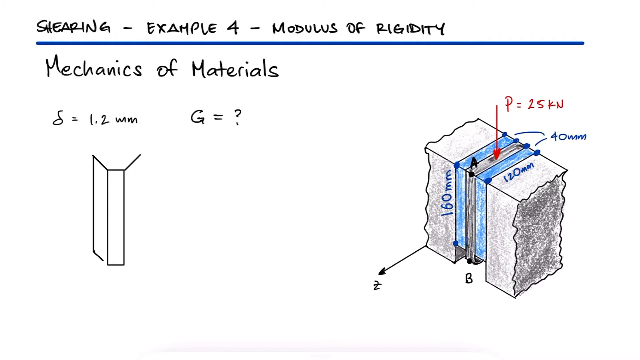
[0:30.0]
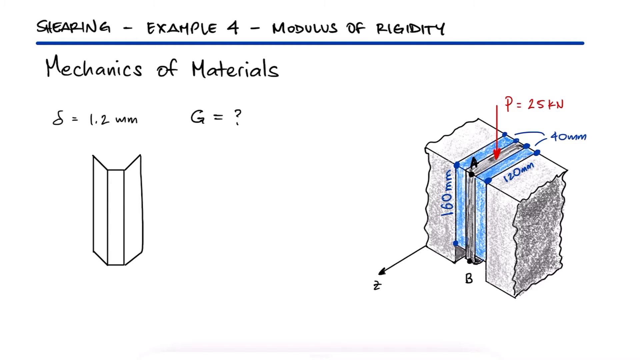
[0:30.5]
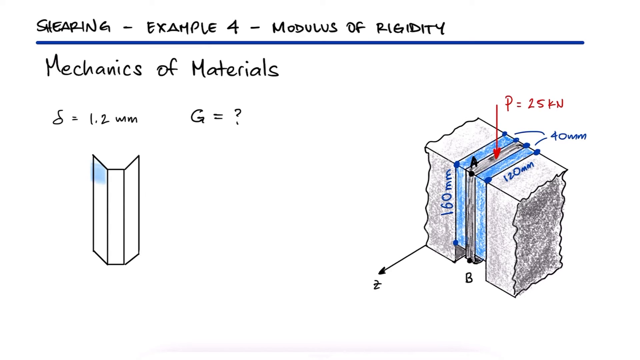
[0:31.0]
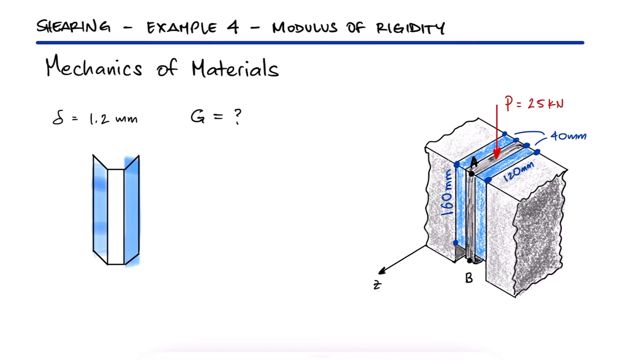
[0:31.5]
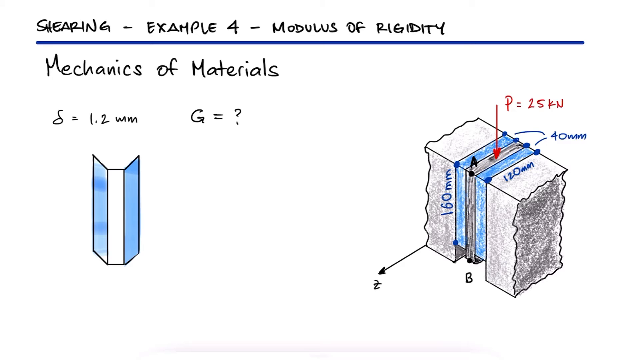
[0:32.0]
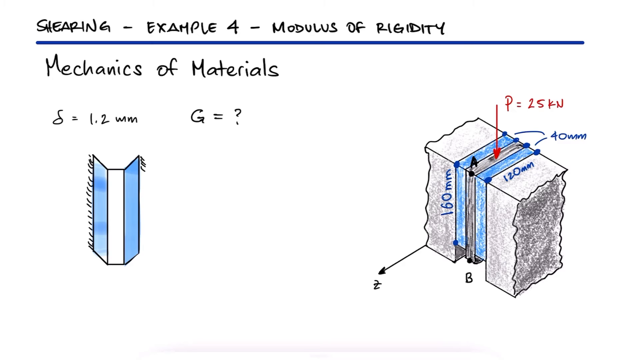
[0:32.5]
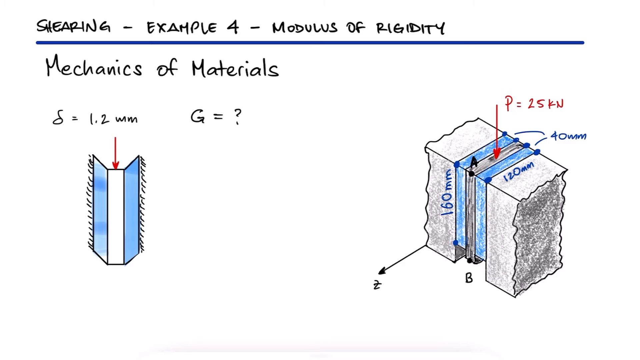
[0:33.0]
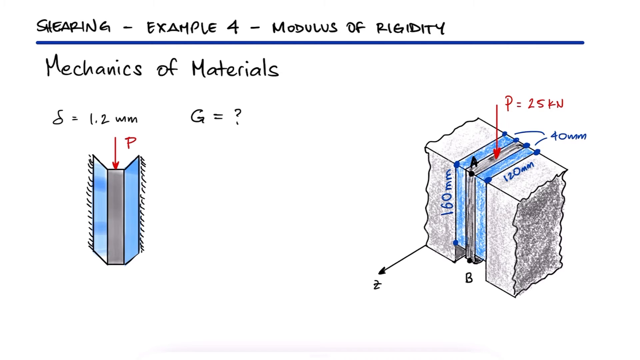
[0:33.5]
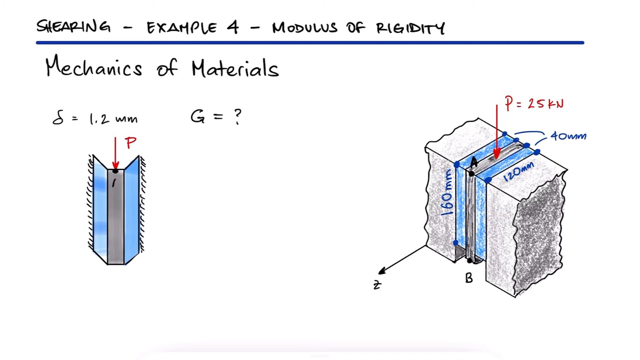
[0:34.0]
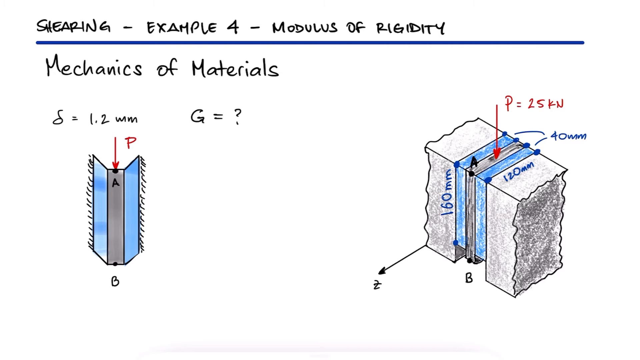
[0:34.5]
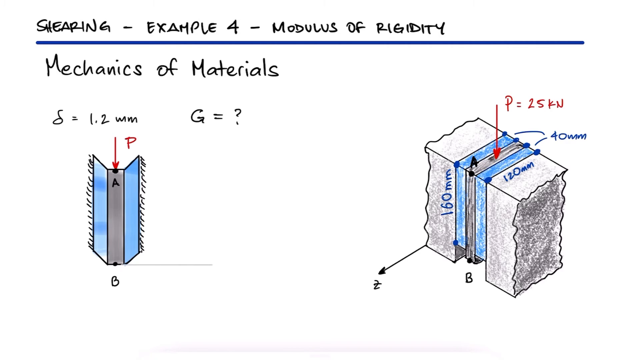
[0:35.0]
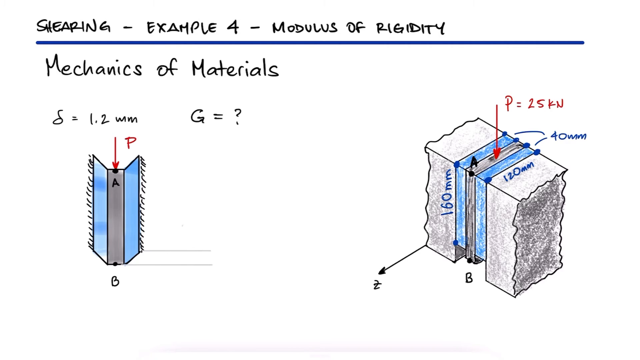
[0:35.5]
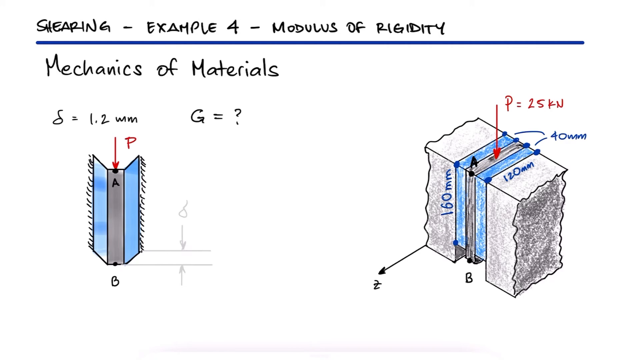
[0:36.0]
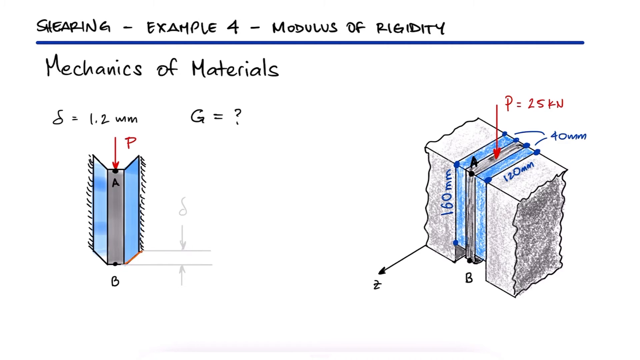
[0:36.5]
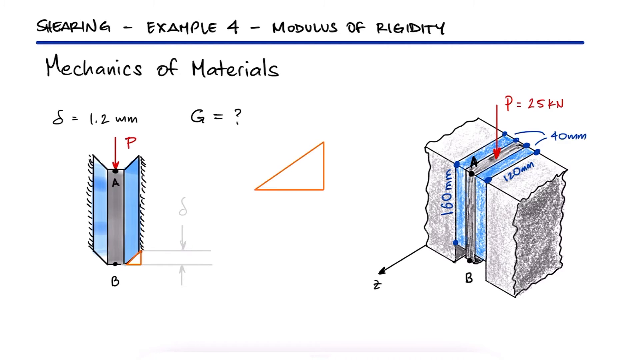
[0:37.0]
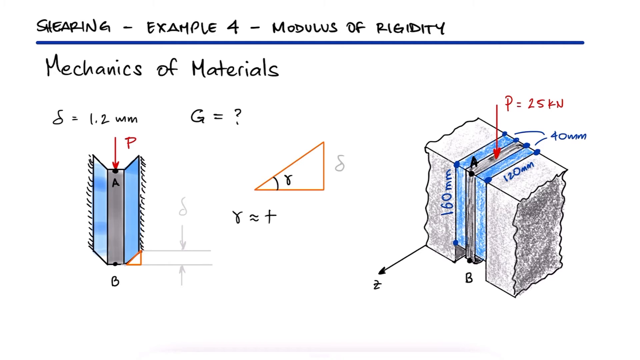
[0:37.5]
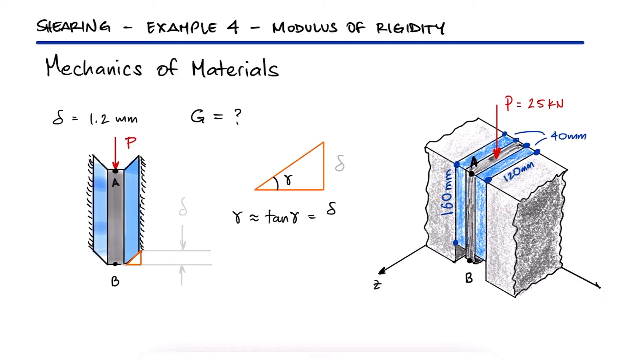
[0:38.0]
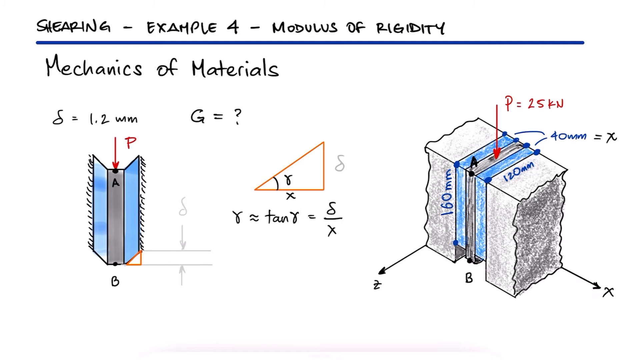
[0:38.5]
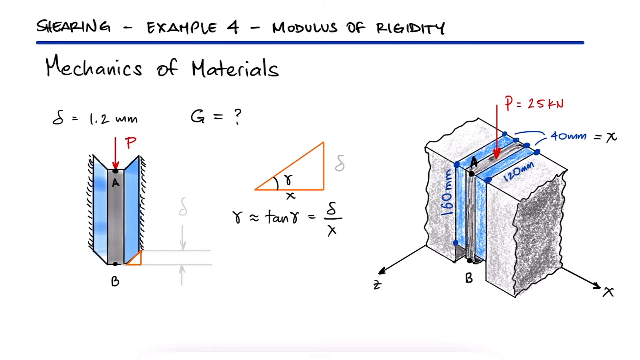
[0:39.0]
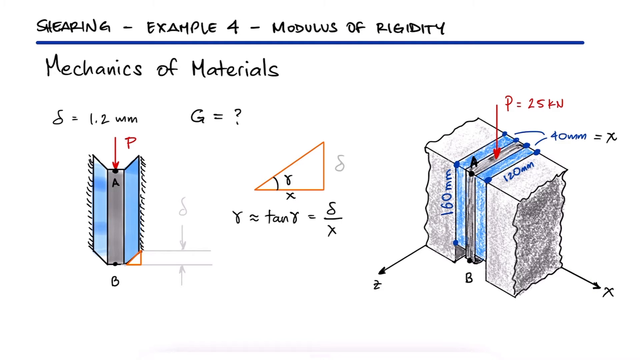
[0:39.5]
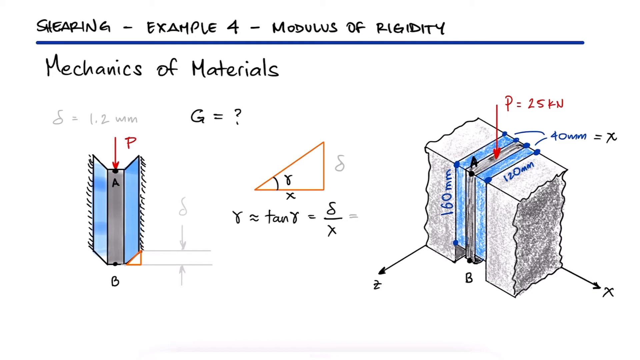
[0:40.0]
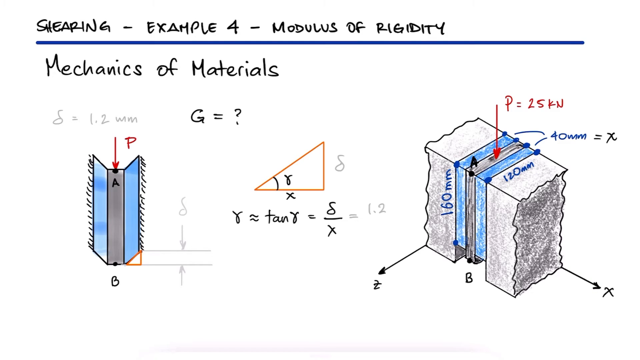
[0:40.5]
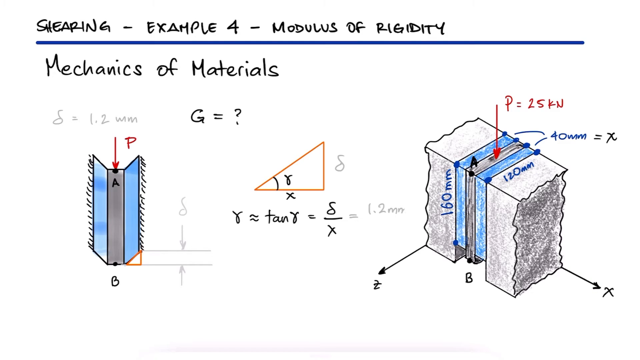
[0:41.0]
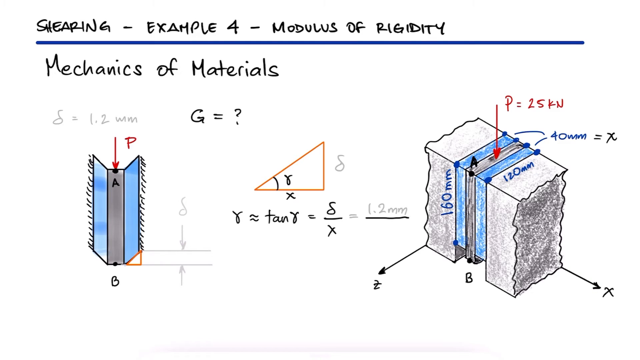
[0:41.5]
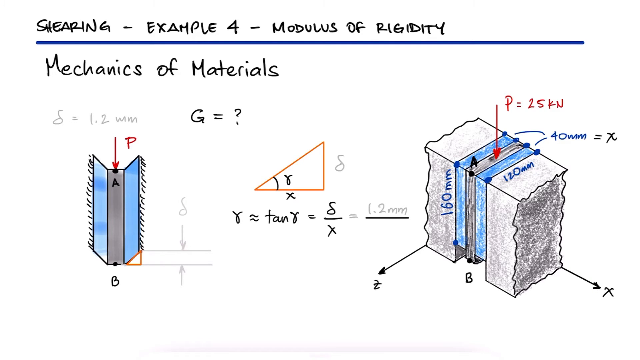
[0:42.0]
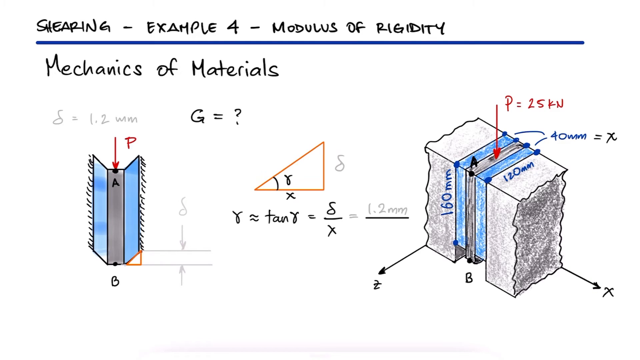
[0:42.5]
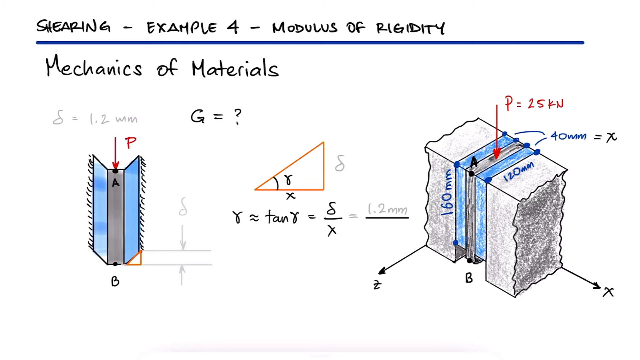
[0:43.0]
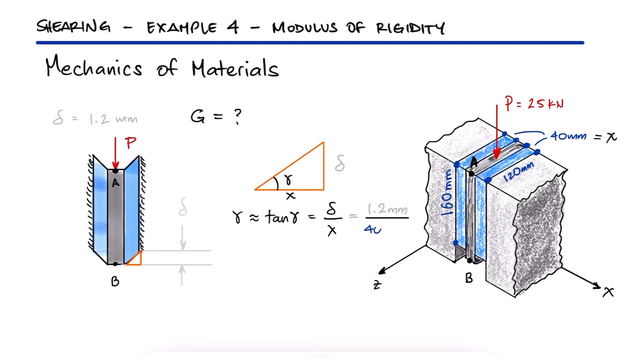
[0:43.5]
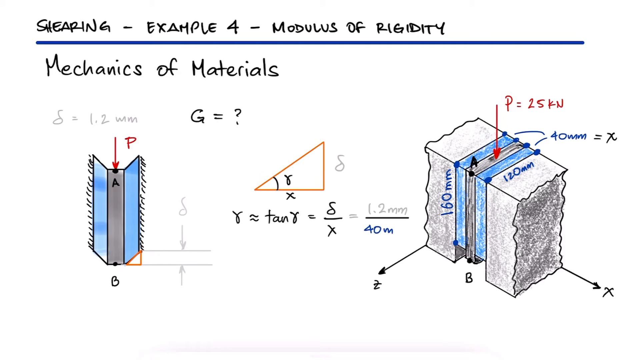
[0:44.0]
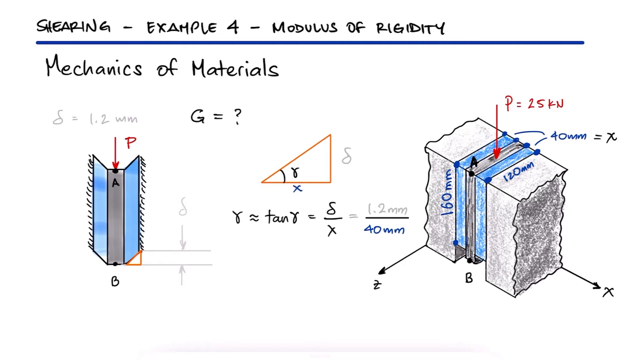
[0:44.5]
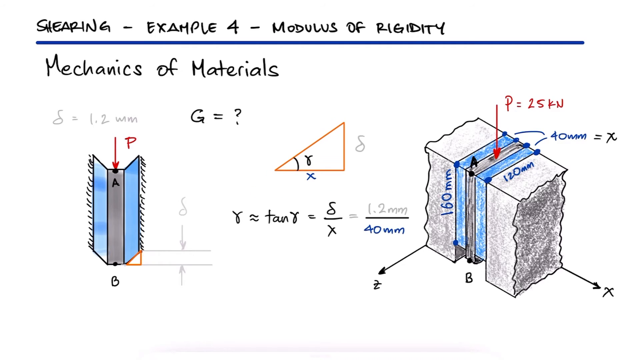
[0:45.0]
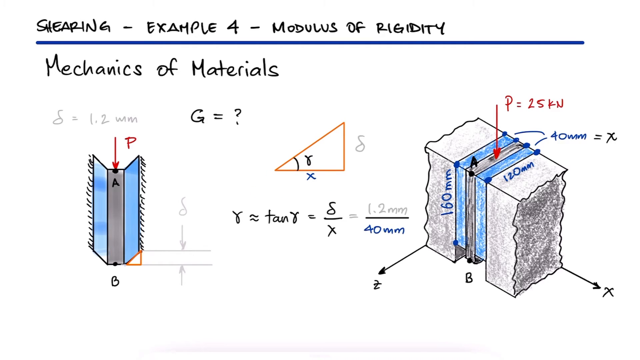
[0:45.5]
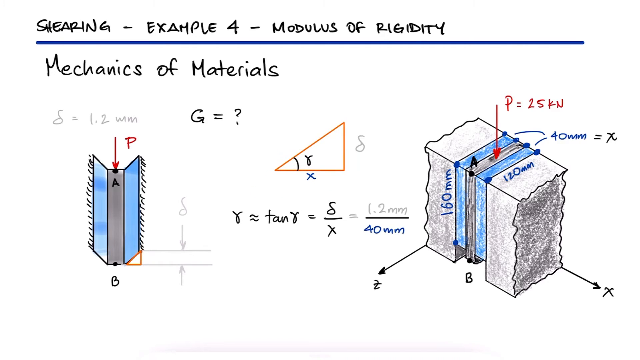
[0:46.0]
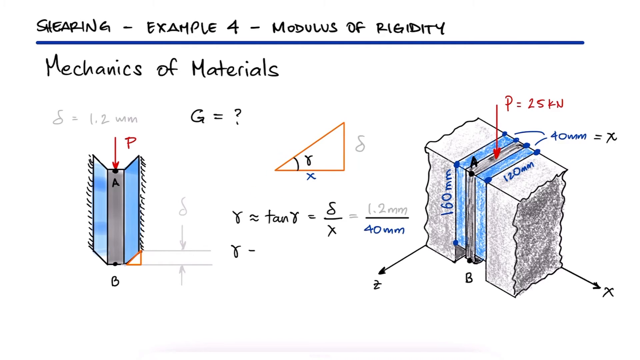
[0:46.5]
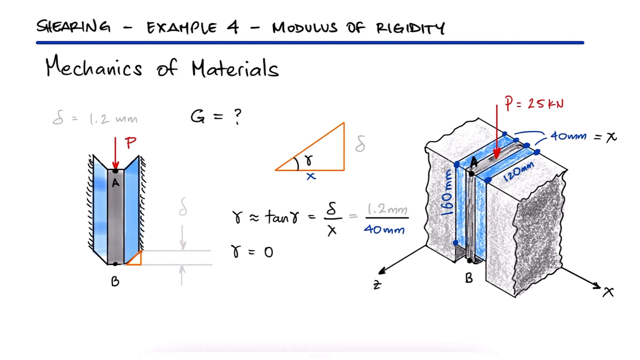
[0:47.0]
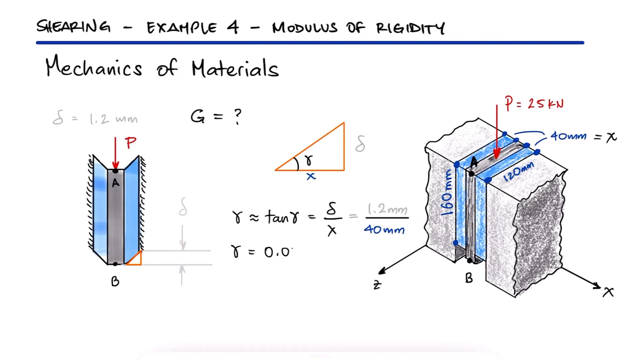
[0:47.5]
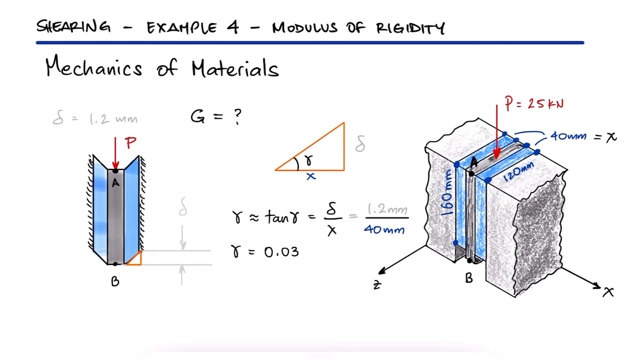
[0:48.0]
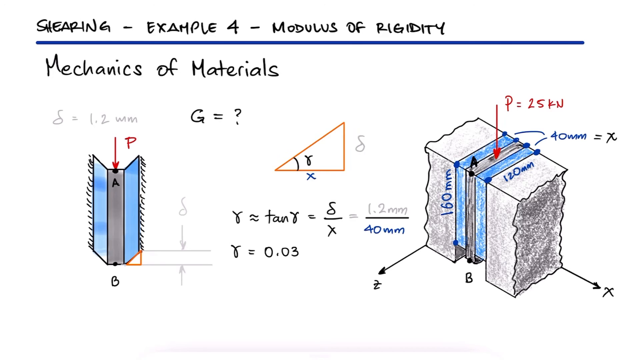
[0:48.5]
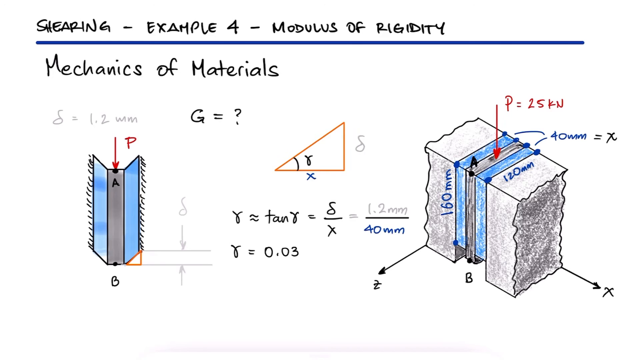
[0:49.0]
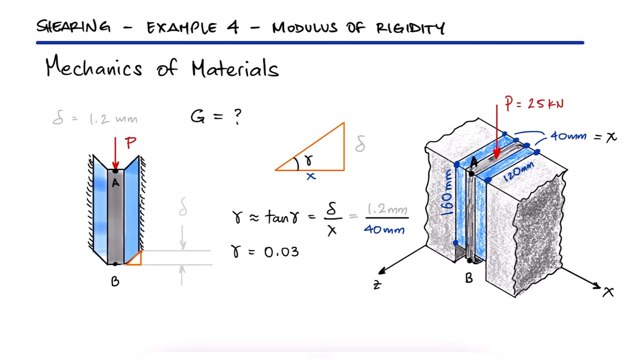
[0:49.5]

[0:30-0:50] A man completes the sketch, adding what looks like a symbol resembling a six or an f, shown from one corner of the sketch with an arrow on the outside. On the left-hand side he draws another sketch that looks to be the right-hand sketch on its own, without the other parts. He adds new elements such as a point B, a point A and P, then draws a point S, which is 1.1 millimeters, in a dark gray pen. In the middle of the sketches is a triangle showing the angle being sought. An equation follows: the symbol equals tan of S over X, which equals 1.1 millimeters over 40 millimeters, and the symbol comes out to 0,03.